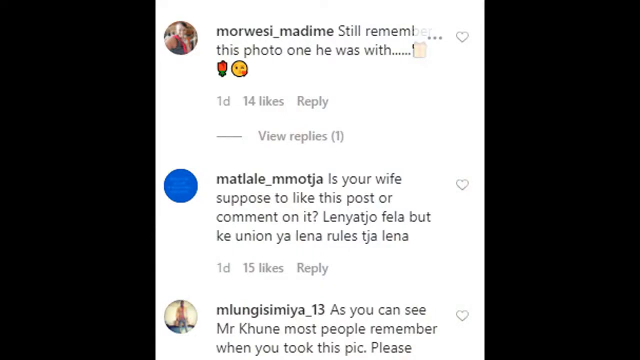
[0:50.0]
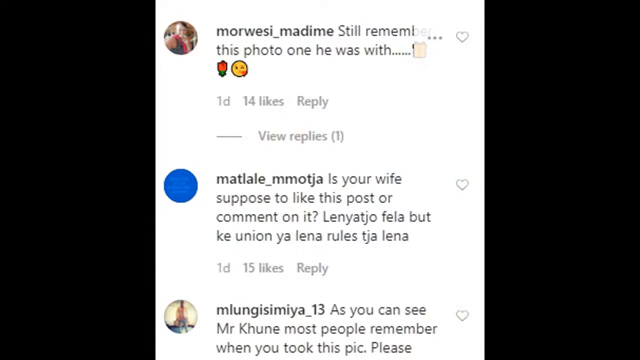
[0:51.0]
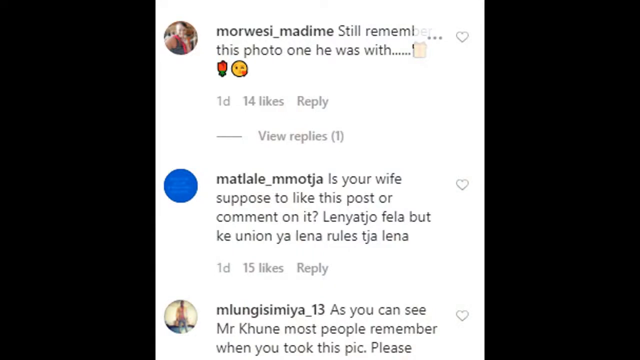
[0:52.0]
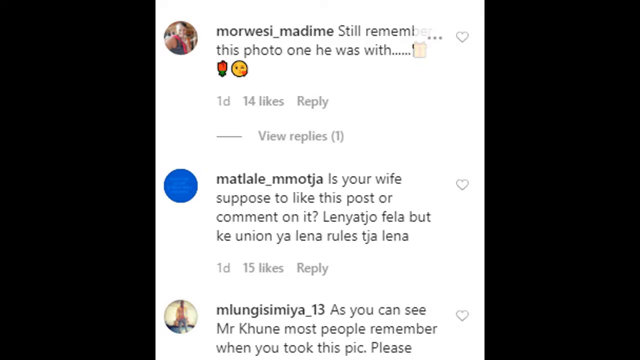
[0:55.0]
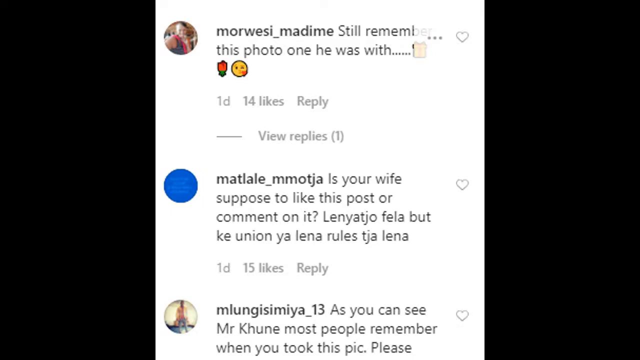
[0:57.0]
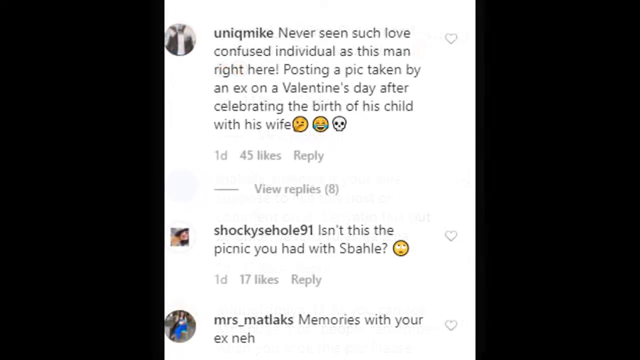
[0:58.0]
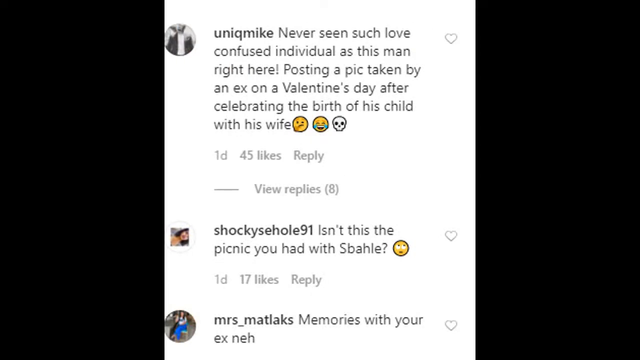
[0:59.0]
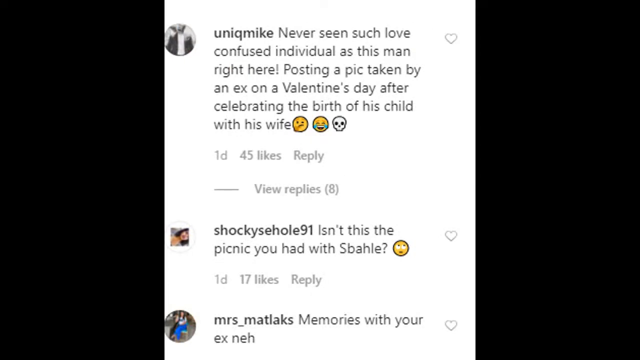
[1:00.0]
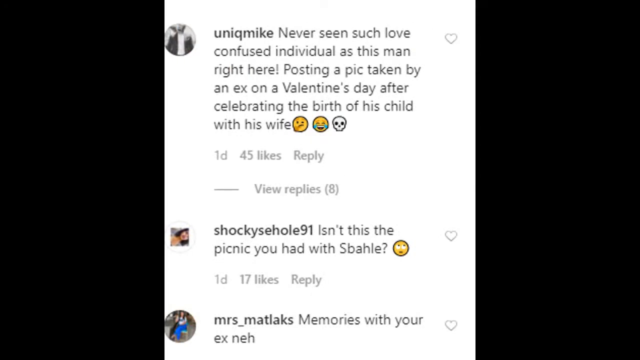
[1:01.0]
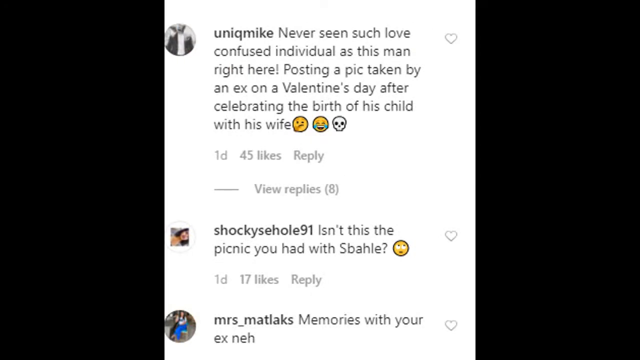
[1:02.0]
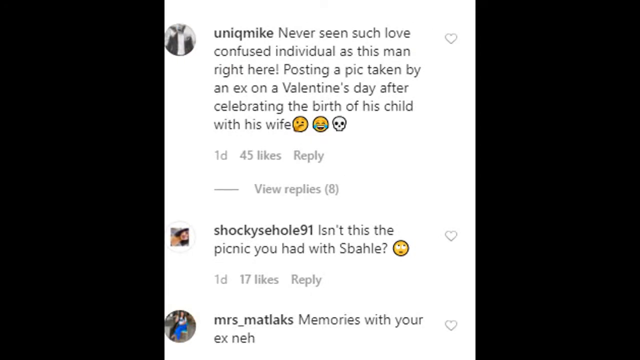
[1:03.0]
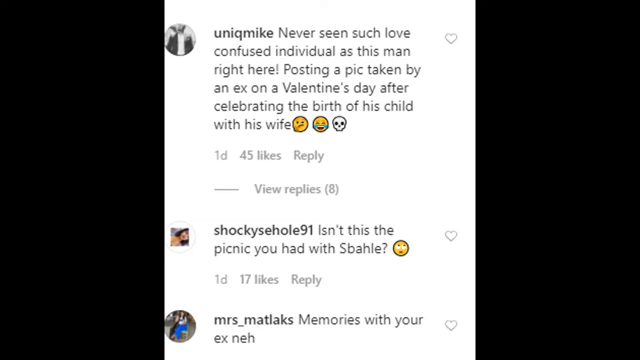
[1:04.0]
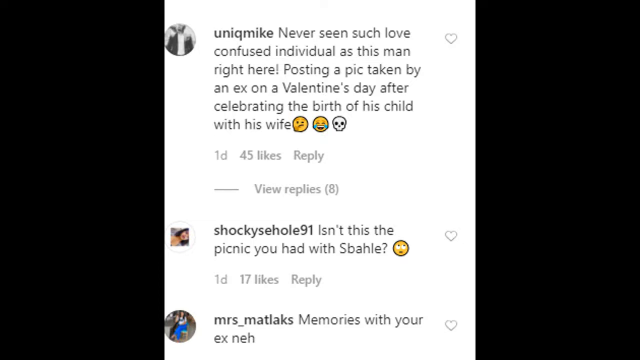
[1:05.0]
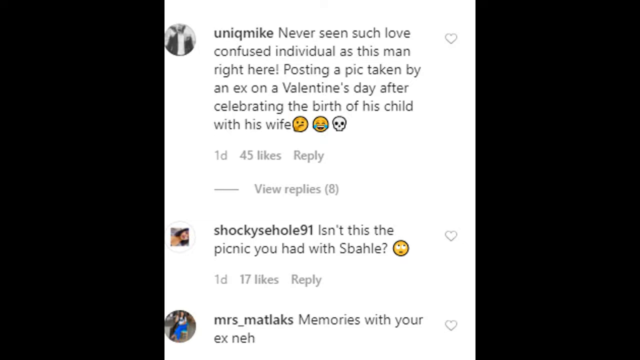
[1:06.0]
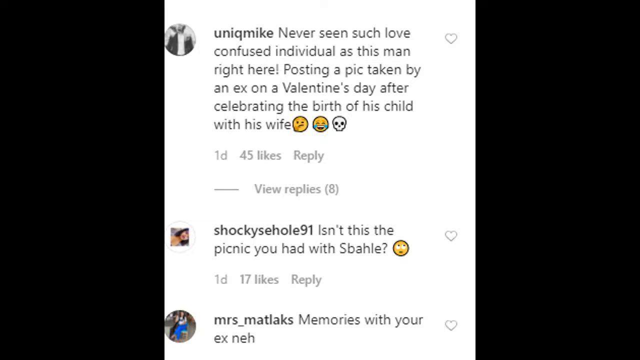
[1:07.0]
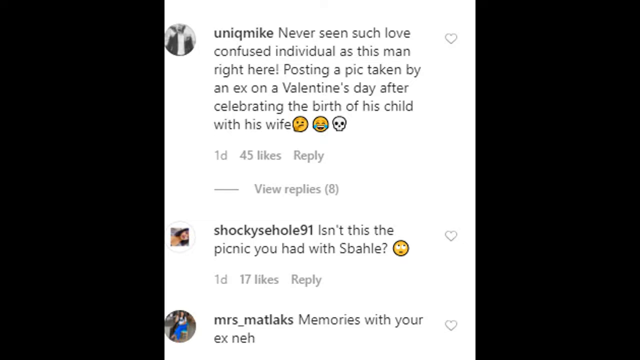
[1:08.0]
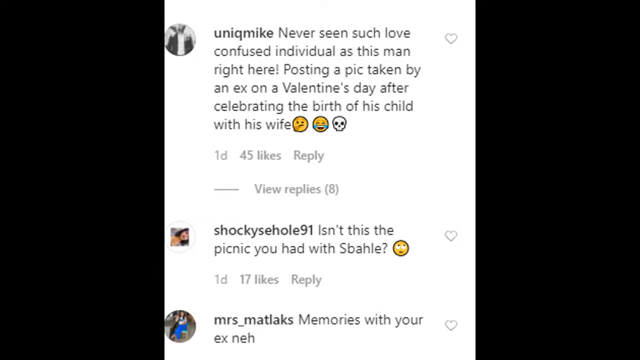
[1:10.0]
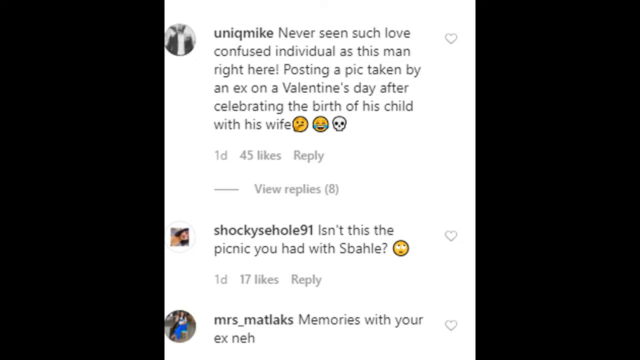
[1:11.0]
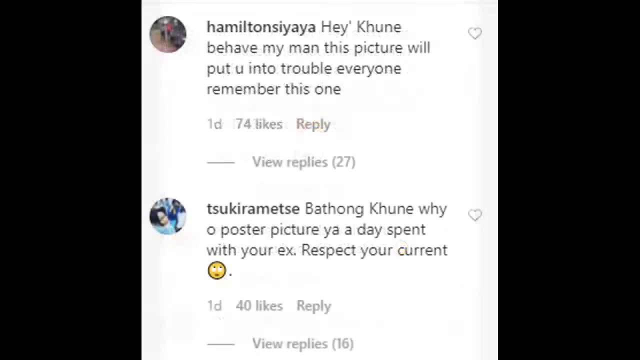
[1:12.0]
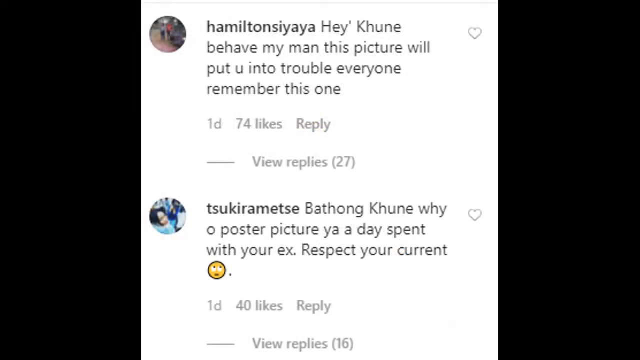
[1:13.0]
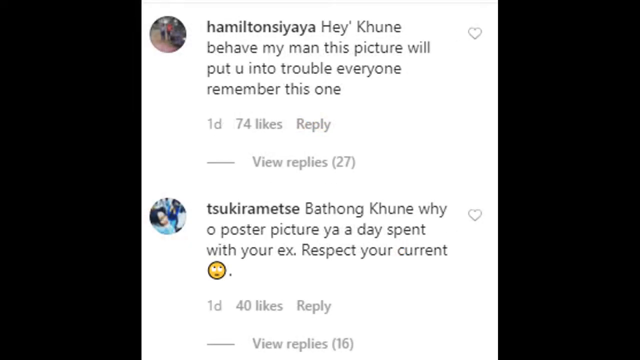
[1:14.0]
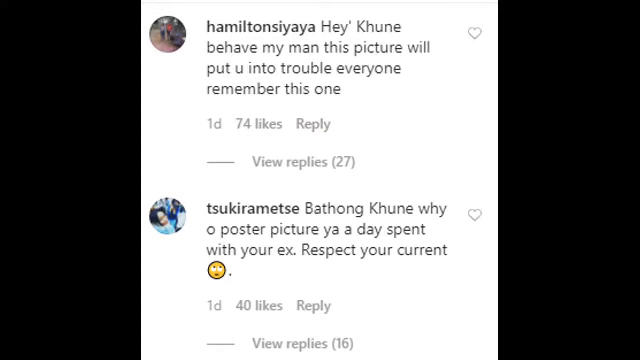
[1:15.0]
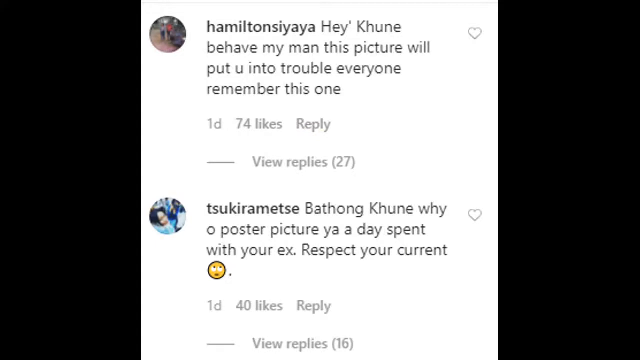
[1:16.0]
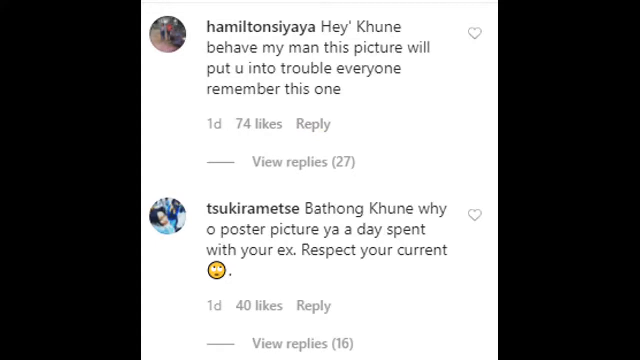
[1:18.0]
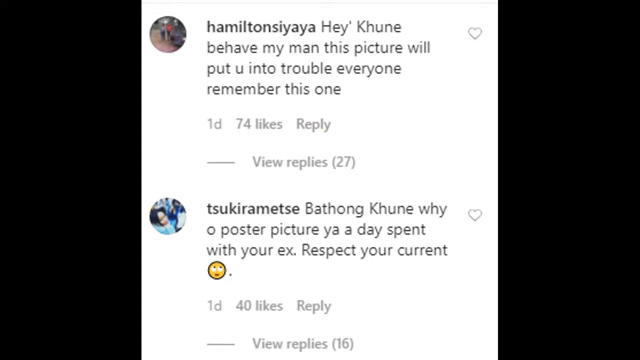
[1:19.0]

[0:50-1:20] The picture is shown as a Facebook post with a number of comments below it. One comment begins "still remembering this photo". Another asks "is your wife supposed to like this post or comment on it", and another says "Mr Khune most people remember when you took this pic please". A further comment reads "never seen such love confused individual as this man right here posting a pic taken by an ex on a valentine's day after celebrating the birth of his child with his wife". Other comments read "isn't this the picnic you had with swathy" and "memories with your ex".